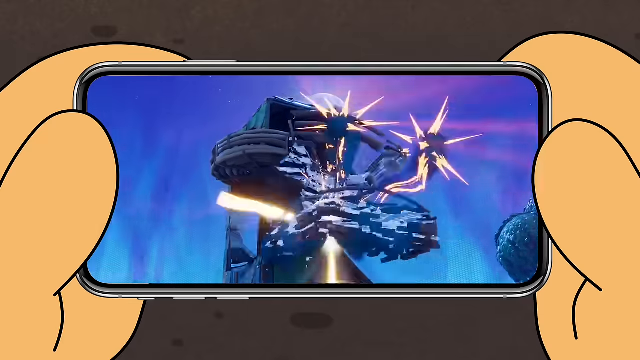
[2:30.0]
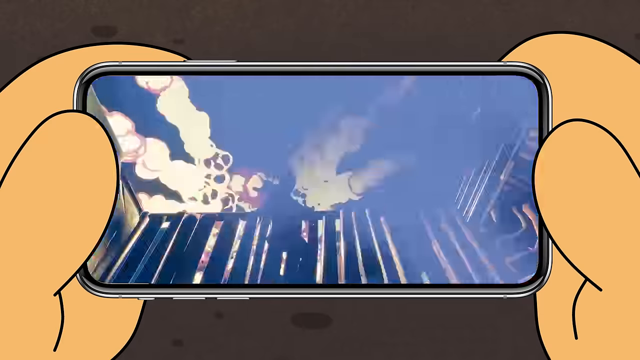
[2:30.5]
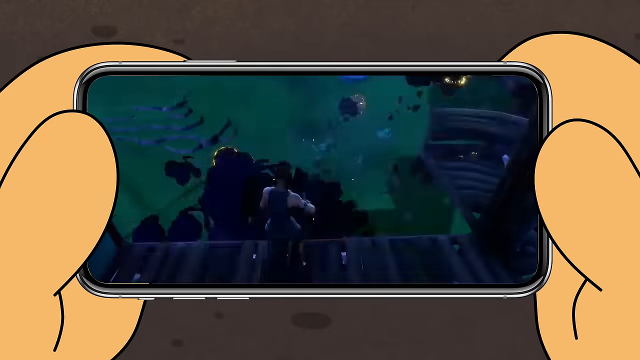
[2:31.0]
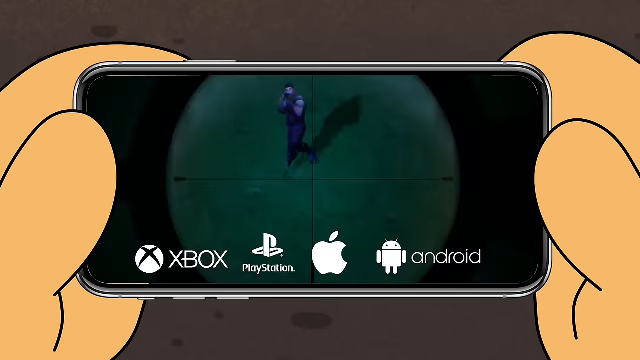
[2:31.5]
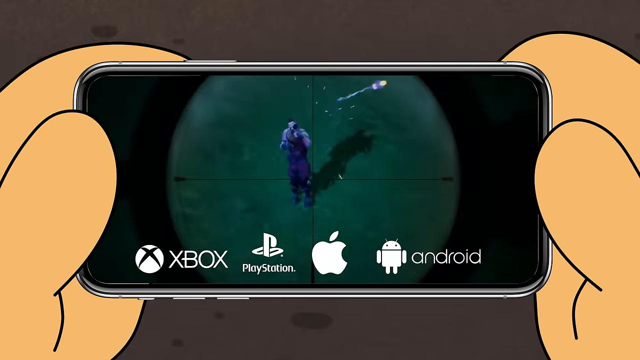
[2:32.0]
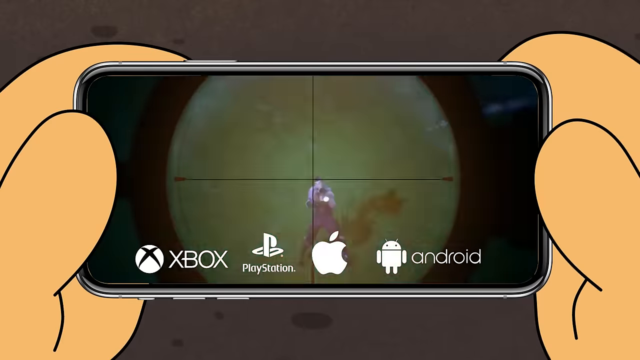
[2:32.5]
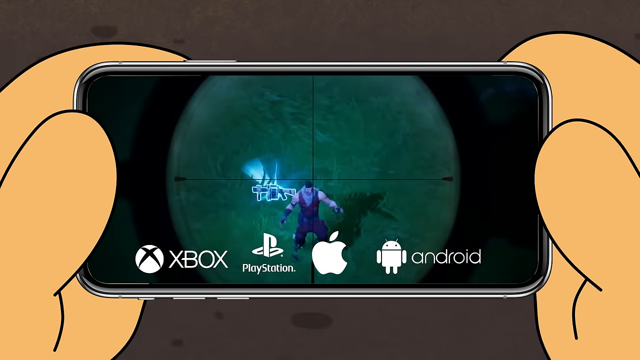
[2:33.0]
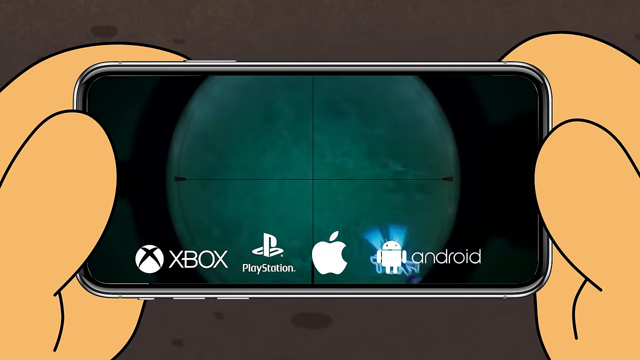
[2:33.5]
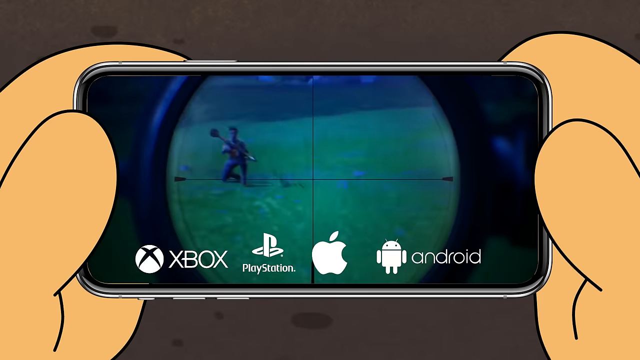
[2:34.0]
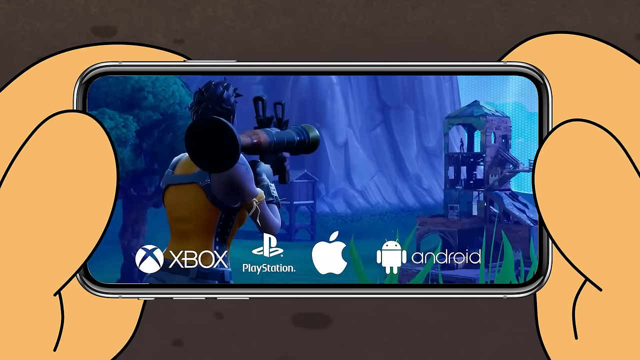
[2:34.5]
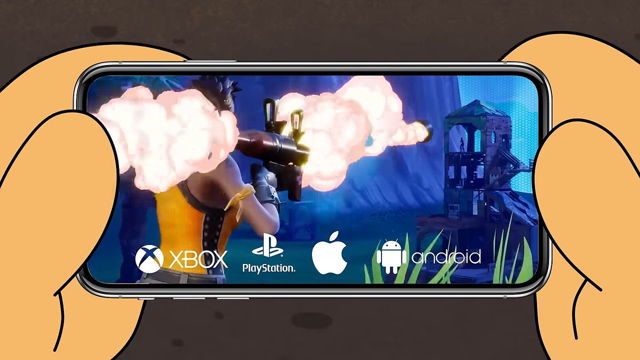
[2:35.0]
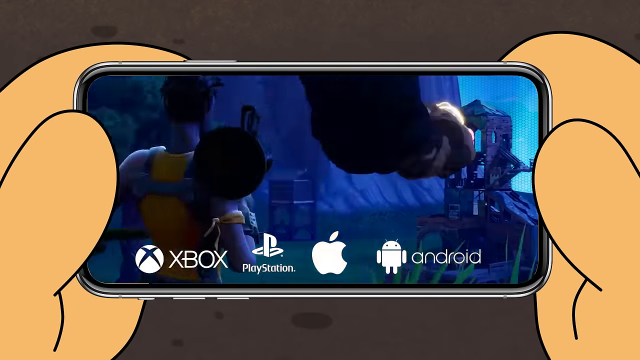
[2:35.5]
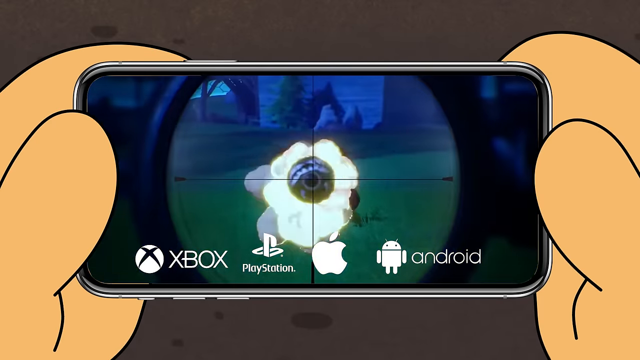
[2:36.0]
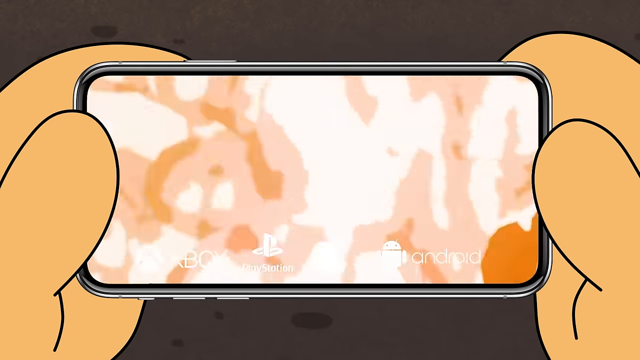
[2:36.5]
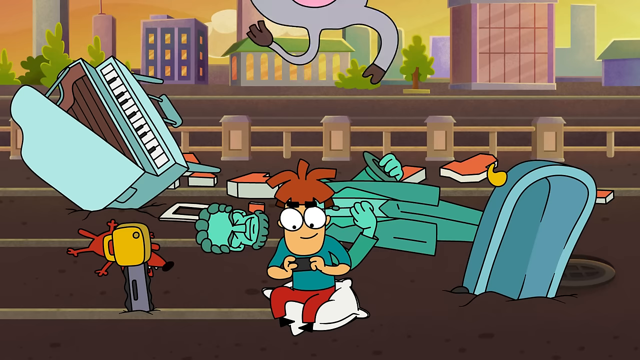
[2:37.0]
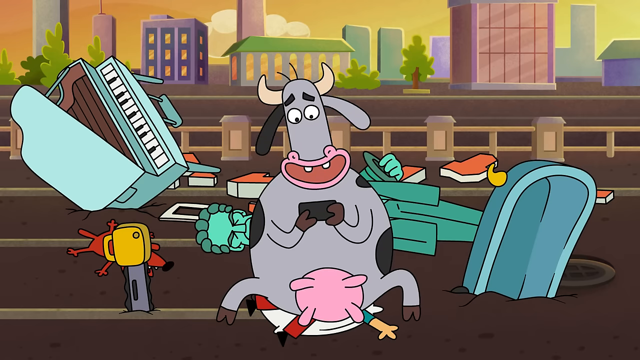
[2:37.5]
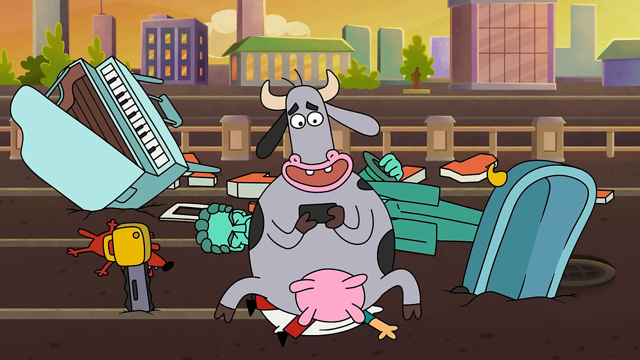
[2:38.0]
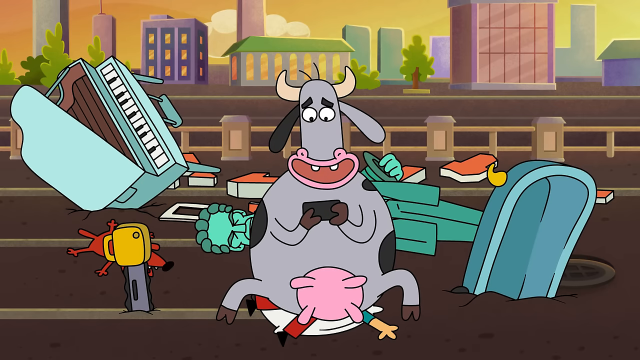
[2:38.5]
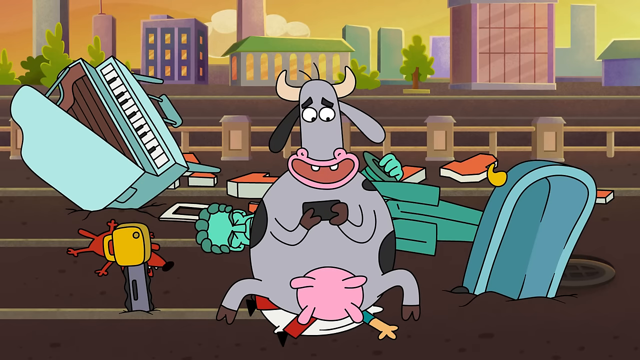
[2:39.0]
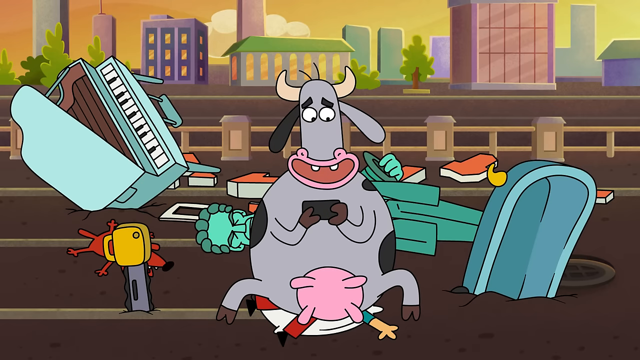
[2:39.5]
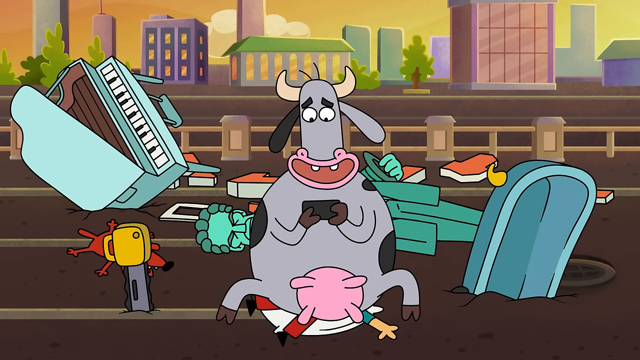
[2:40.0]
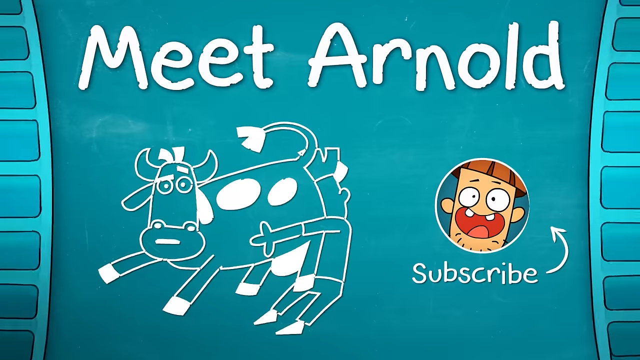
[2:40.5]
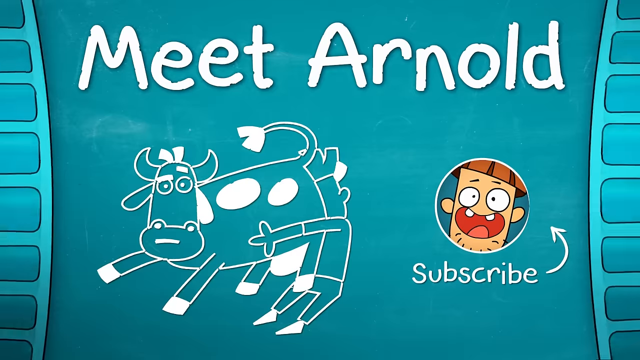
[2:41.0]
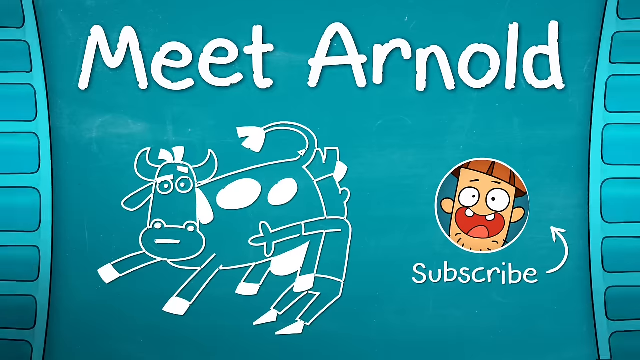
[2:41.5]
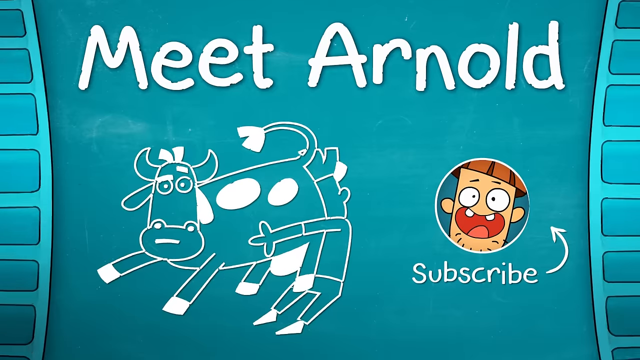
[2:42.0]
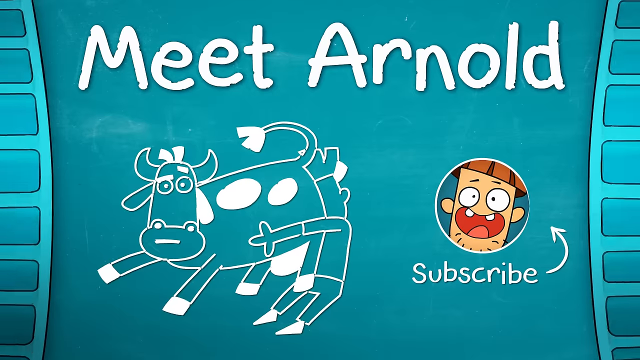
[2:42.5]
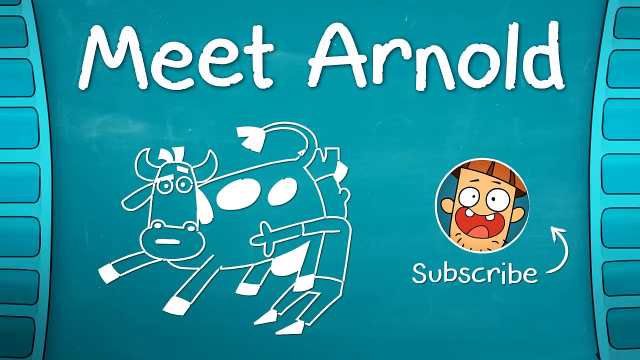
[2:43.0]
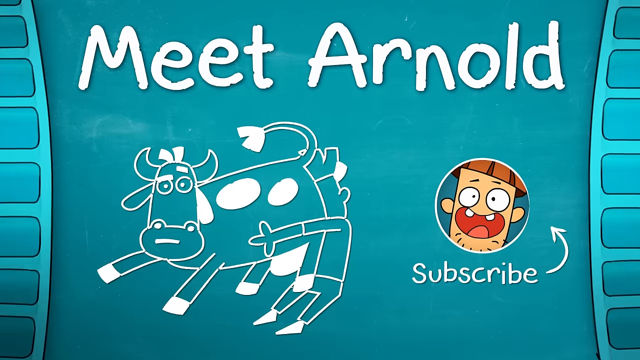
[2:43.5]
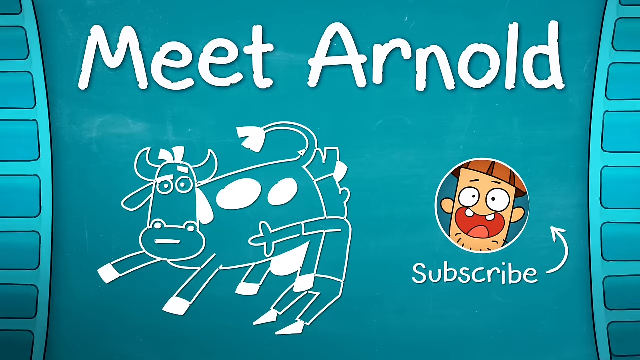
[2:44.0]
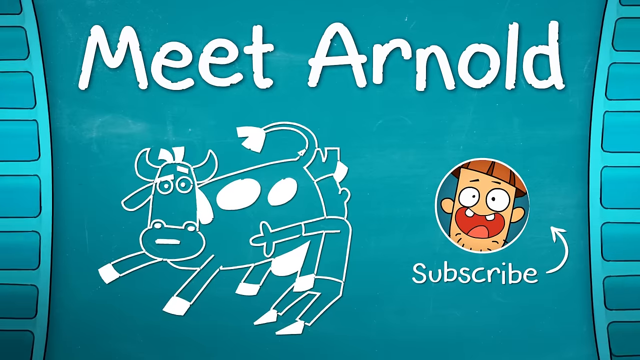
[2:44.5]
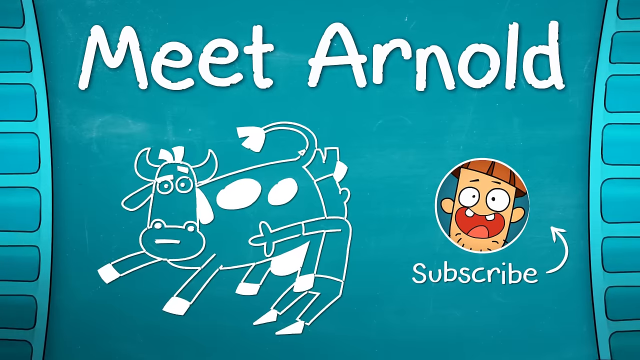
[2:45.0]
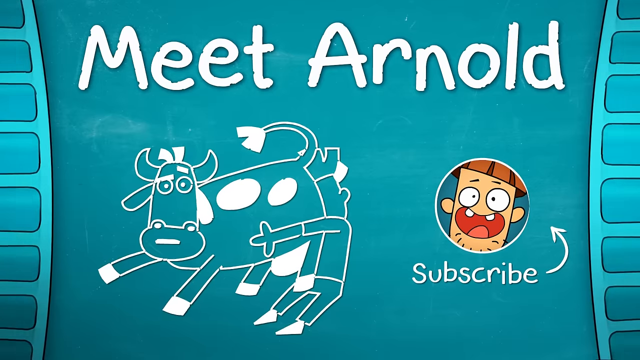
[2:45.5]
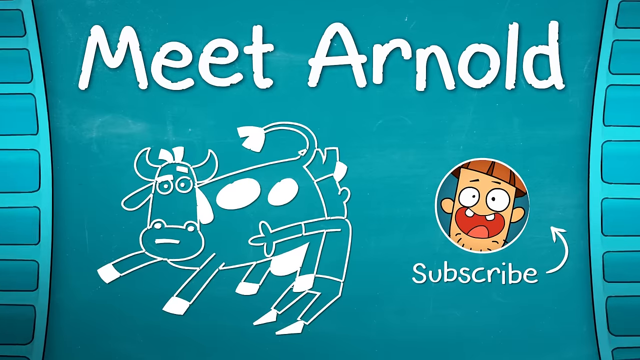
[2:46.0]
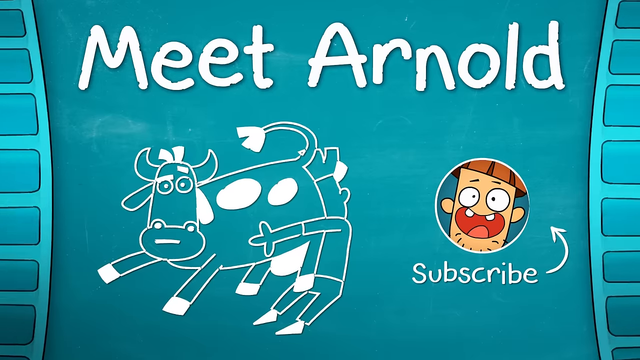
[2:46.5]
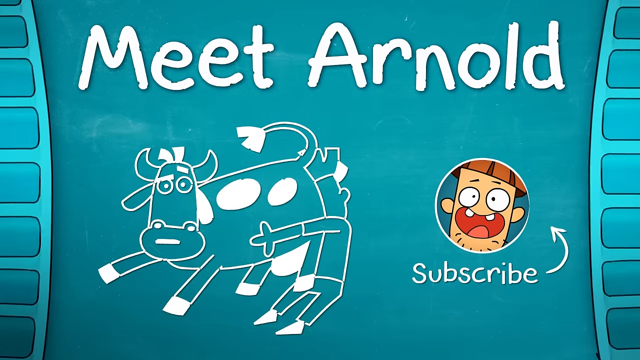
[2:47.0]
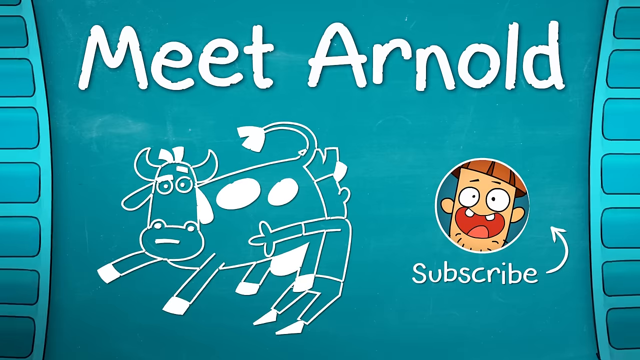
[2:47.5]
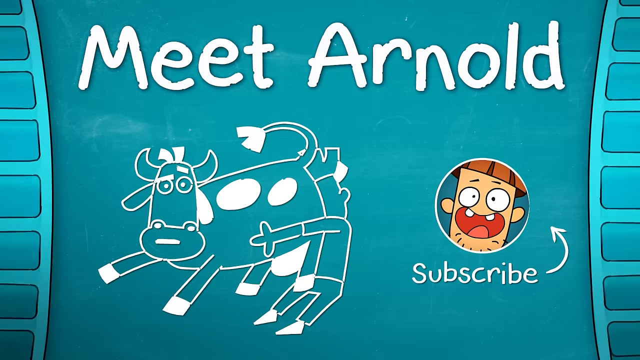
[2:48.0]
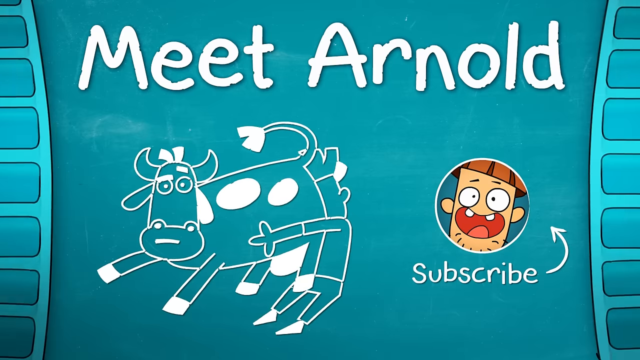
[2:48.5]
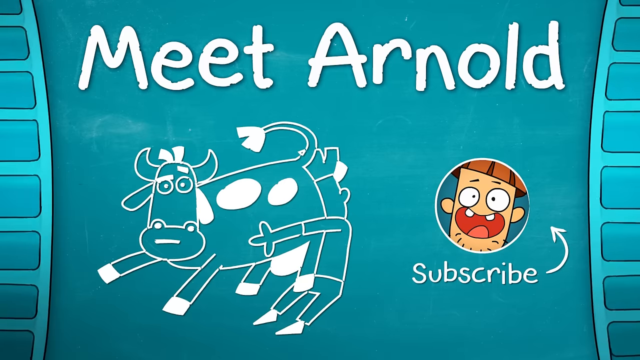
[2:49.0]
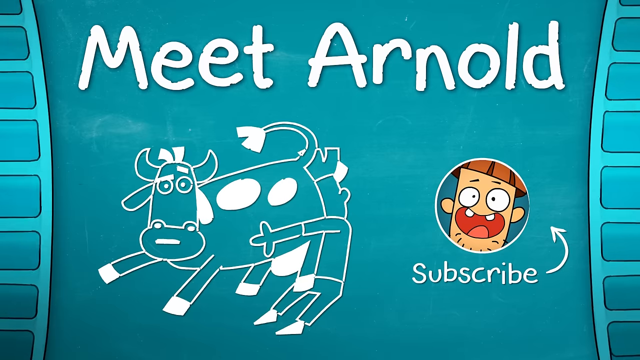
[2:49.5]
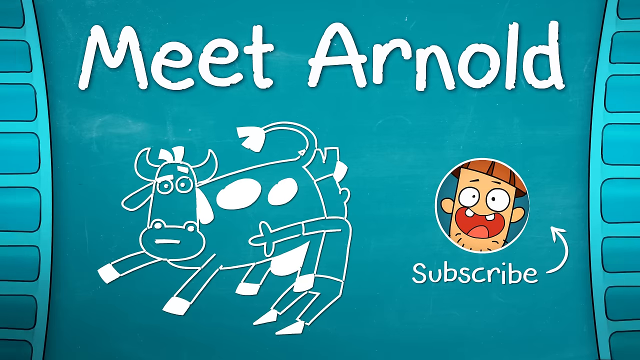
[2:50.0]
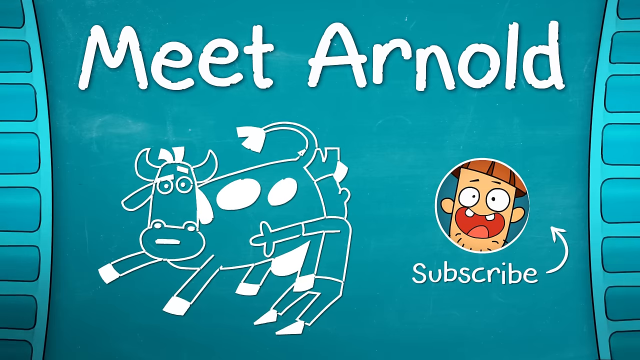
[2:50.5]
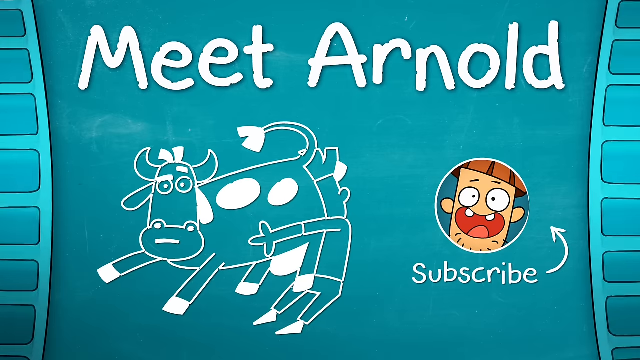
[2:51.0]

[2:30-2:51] A cartoonish scene shows hands holding what appears to be a phone or other electronic device with an LED screen, on which explosions are going on. A character with a gun aims through a scope, and crosshairs are shown with another character near them. At the bottom of the phone screen, white text reads "Xbox, PlayStation", followed by an Apple icon with a bite taken out of it, and to the right "Android" with a little white robot. The character in the crosshairs fires something from their gun, then falls to the ground, dropping their weapon. Another scene shows a character with an RPG firing, somebody standing in a building, and then an explosion. Then a new cartoonish scene shows a gray and black cow that looks kind of like a Holstein falling on top of a cartoon character's head, smashing him, and landing on a pillow beneath the character. A chainsaw, a piano, a bathtub and a broken statue are behind the cow, with other items all around. A dog that appears to be unconscious or dead is behind the chainsaw in the bottom left corner of the screen.